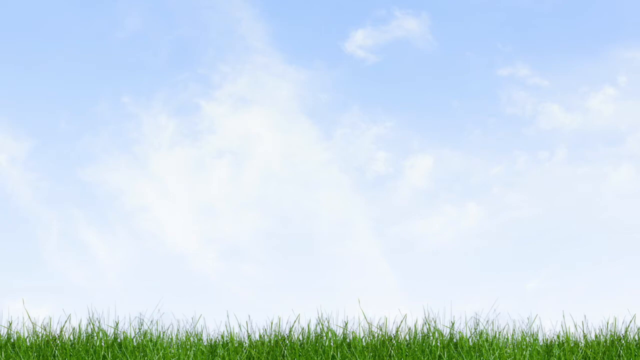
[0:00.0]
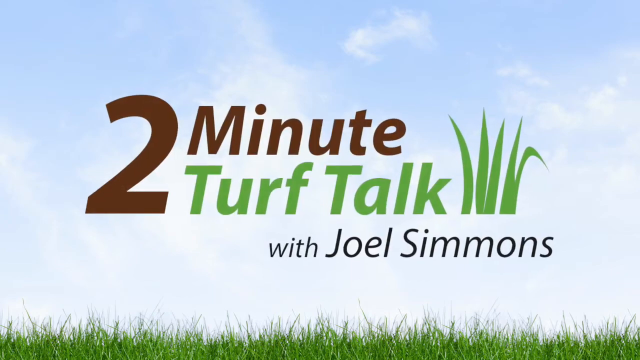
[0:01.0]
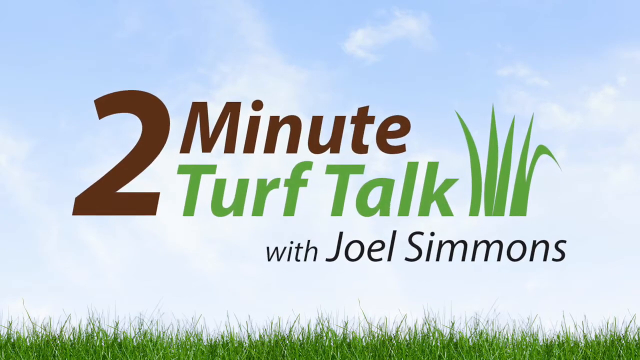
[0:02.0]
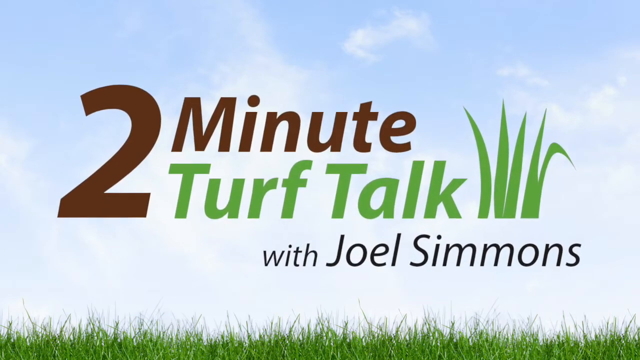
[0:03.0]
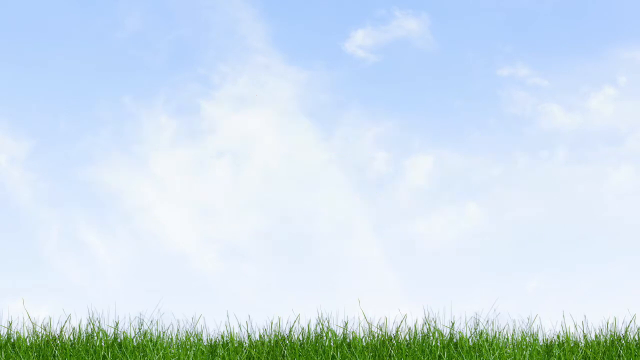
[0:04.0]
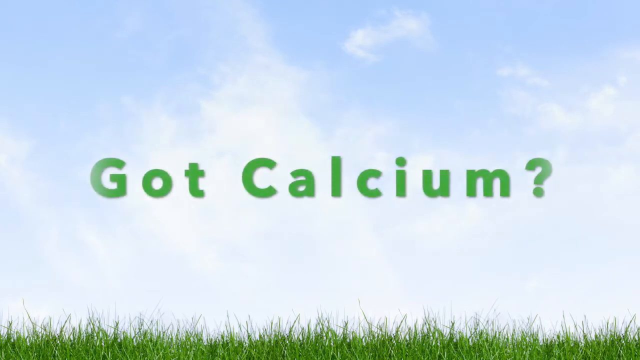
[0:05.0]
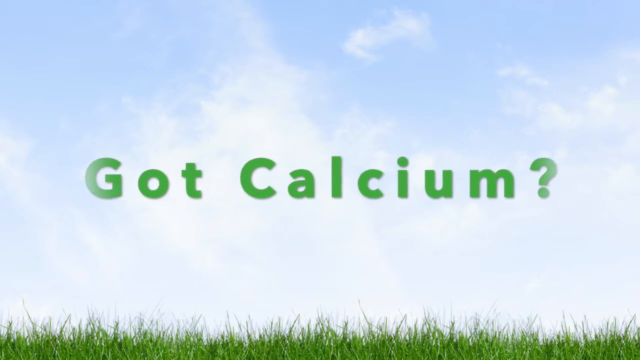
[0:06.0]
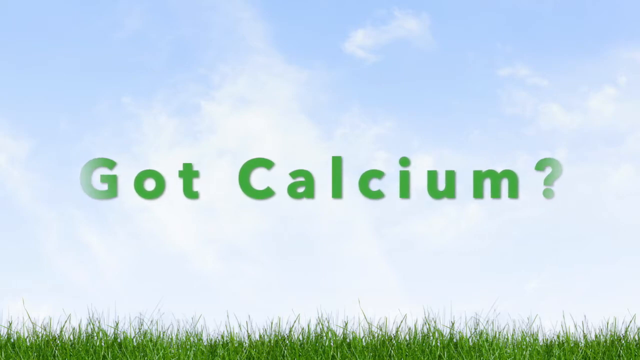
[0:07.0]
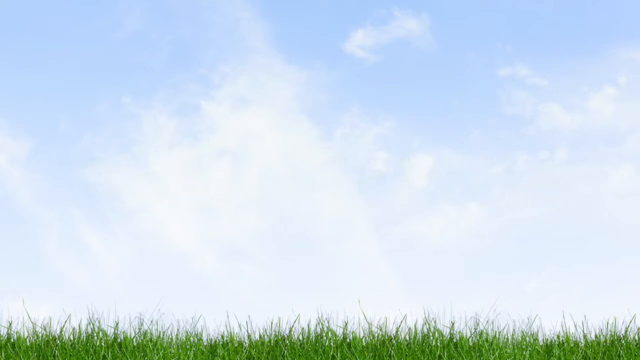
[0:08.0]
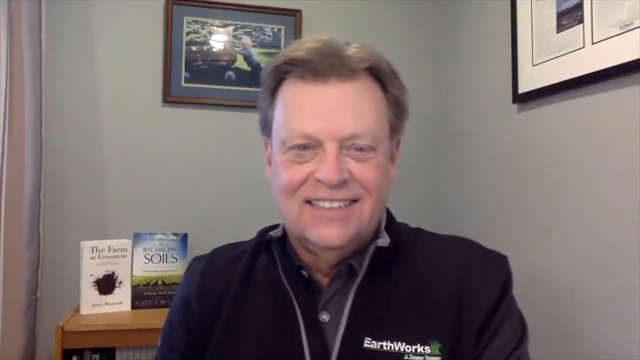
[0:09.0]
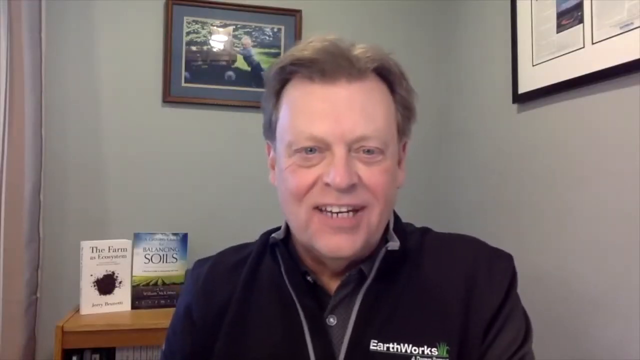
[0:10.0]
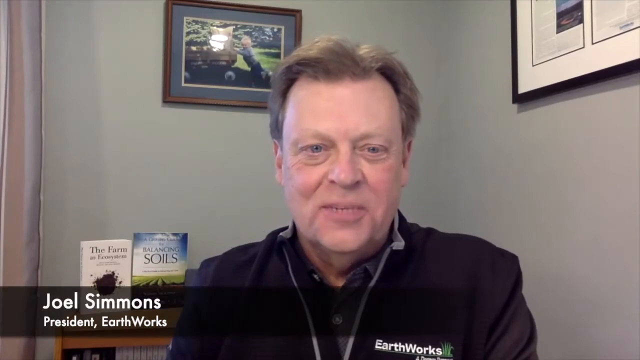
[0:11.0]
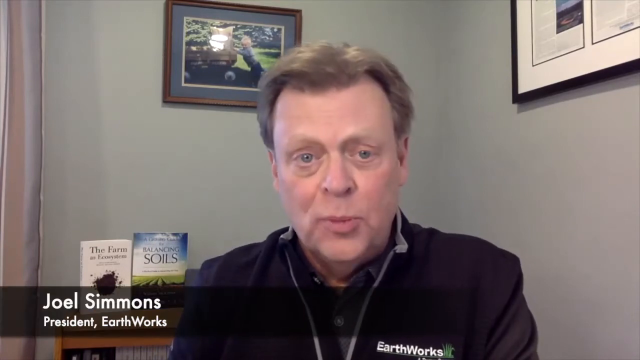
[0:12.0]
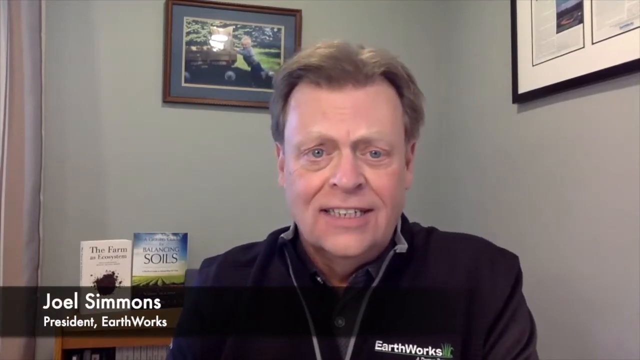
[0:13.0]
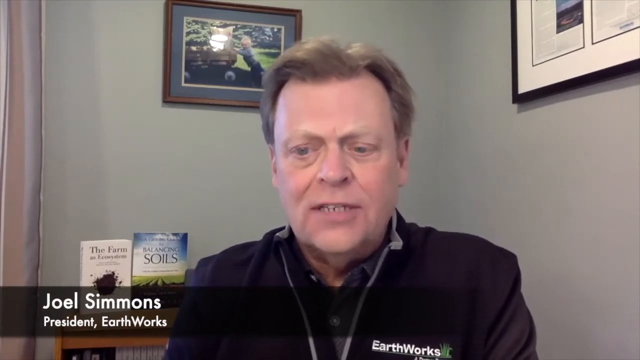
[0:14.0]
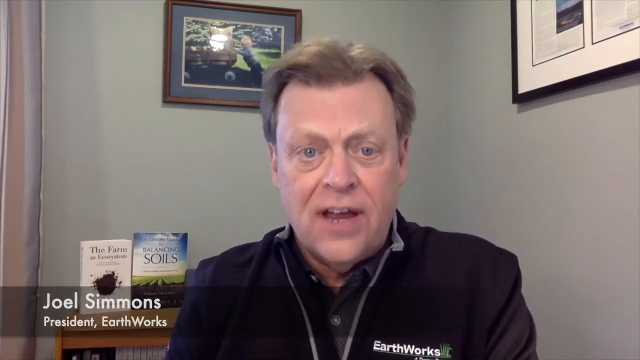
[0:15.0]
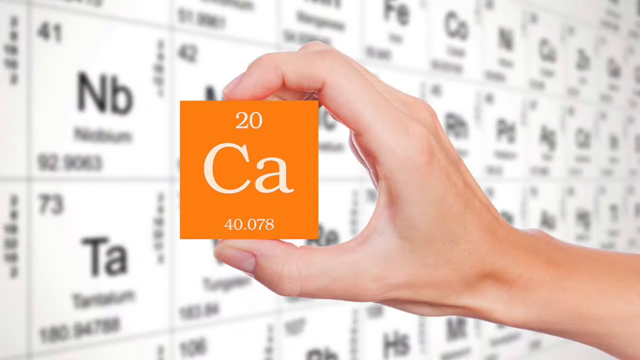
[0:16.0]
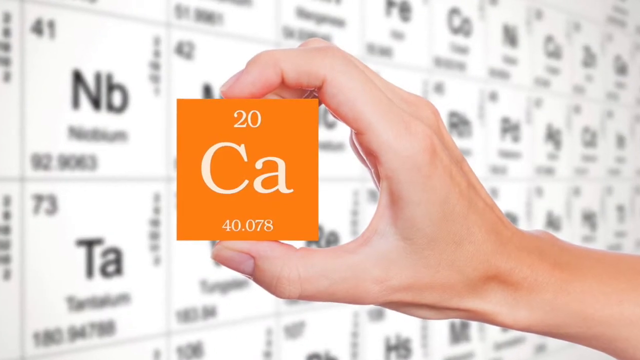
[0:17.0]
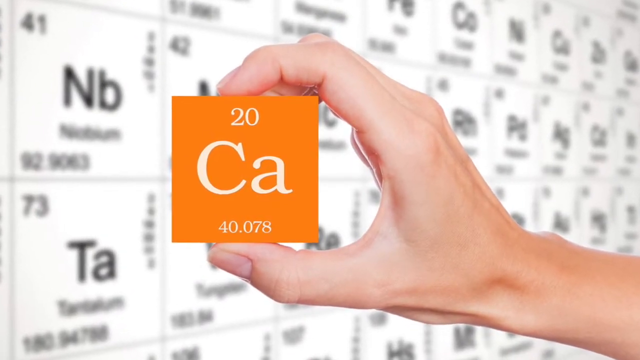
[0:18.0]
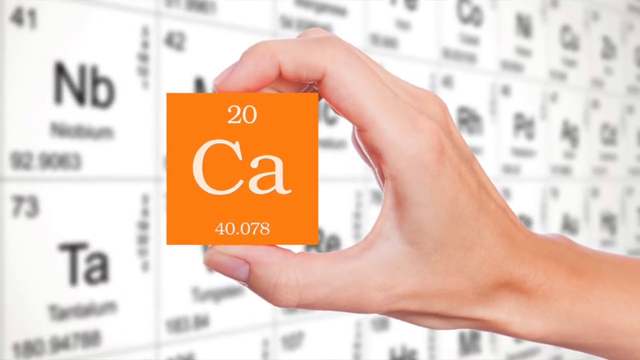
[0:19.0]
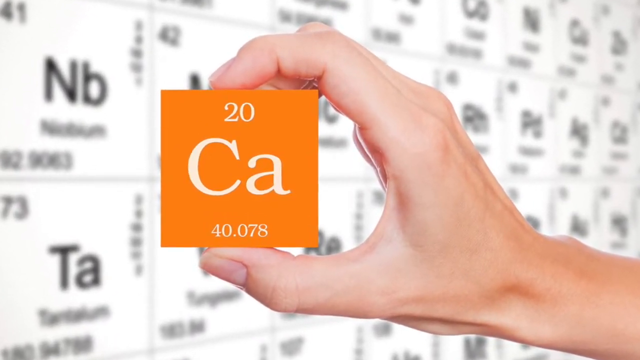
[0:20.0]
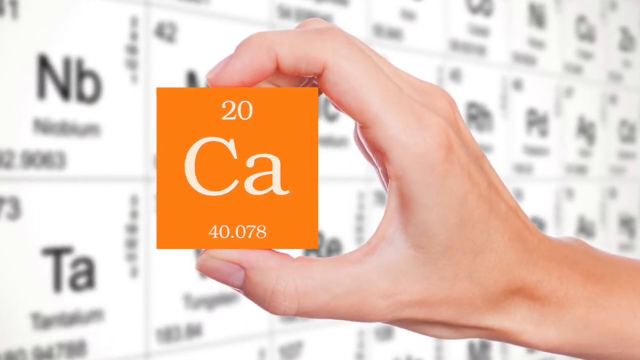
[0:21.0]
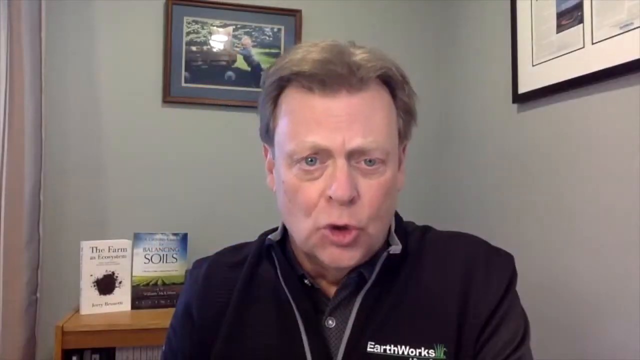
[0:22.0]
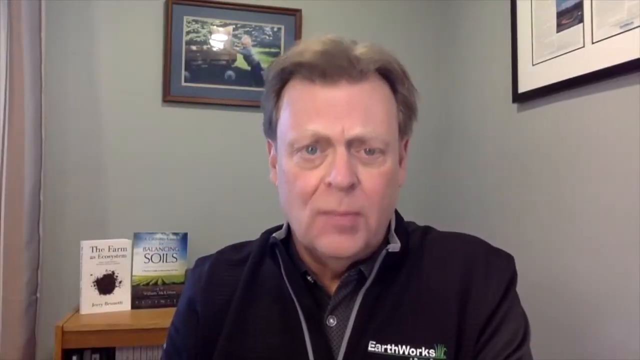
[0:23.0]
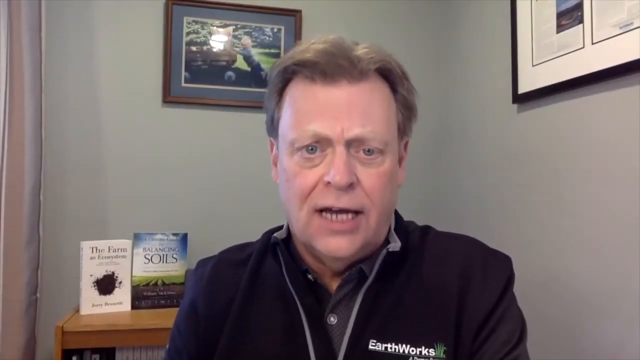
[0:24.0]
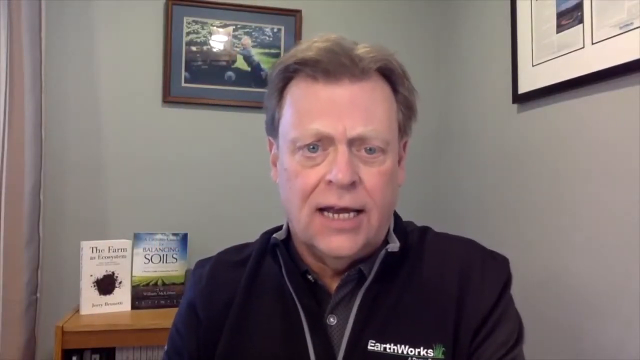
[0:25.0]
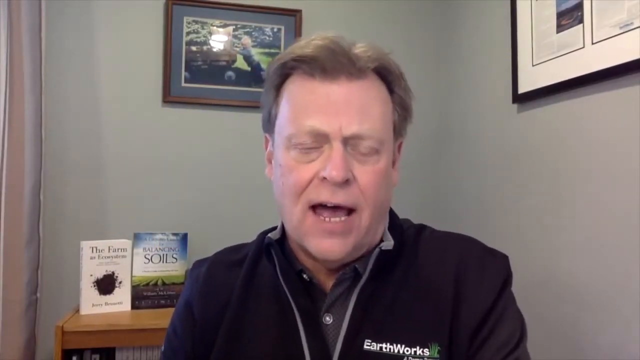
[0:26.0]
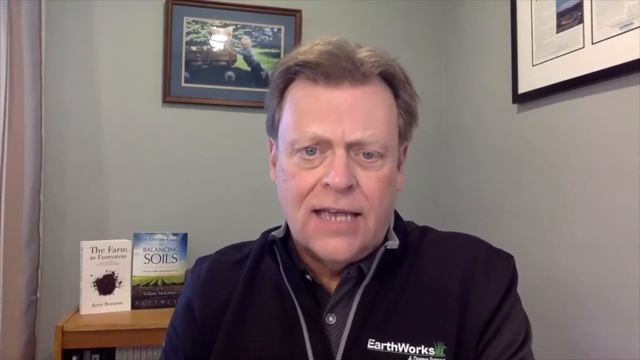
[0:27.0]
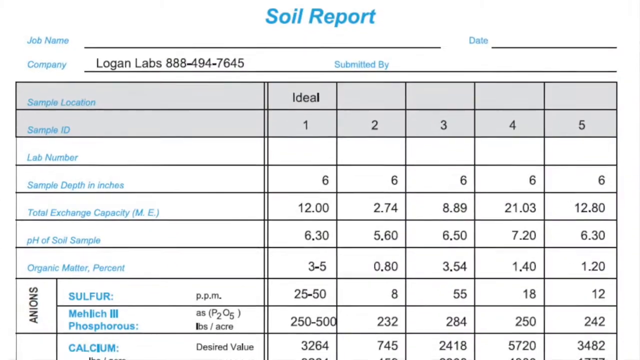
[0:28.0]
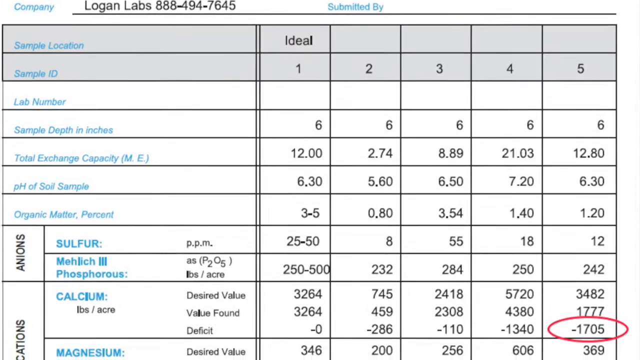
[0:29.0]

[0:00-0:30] The video opens with the words "Two-minute Turf Talk with Joel Simmons" and "Got Calcium?" A gentleman in an office speaks toward the camera. He wears a black shirt and smiles as he speaks. Text in the corner, right under him on the screen, reads "Joel Simmons, President of Earthworks," and his shirt also says "Earthworks" on the right-hand side. The video then cuts to a screen full of scientific codes, and someone holds up one of them, which reads "20 CA 40.078." It cuts back to Joel, who continues speaking. Another scene follows, reading "soil report" and naming the company "Logan Labs," and many different data results are visible on the Logan Labs soil report.